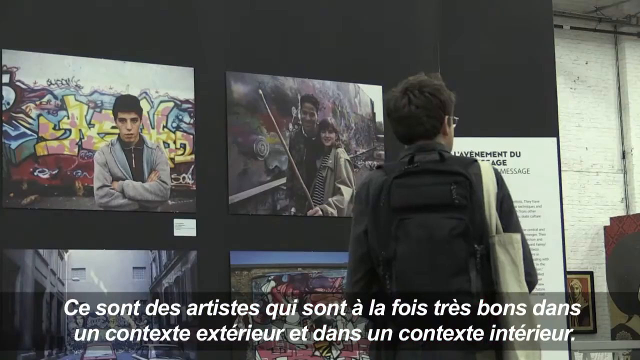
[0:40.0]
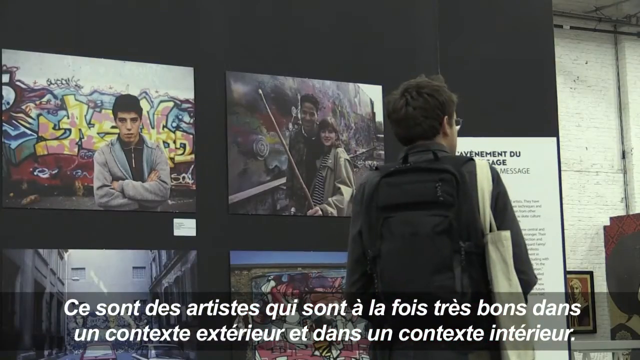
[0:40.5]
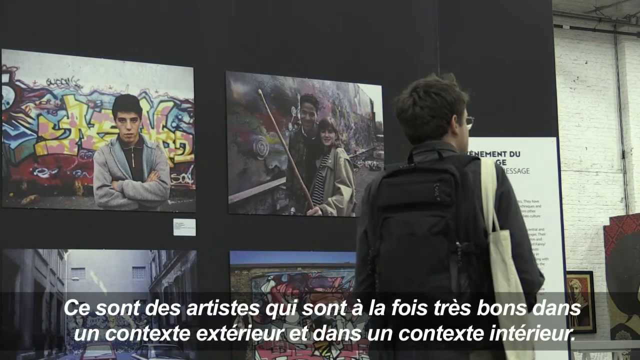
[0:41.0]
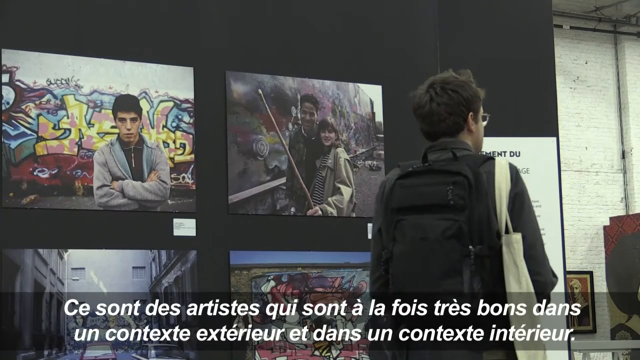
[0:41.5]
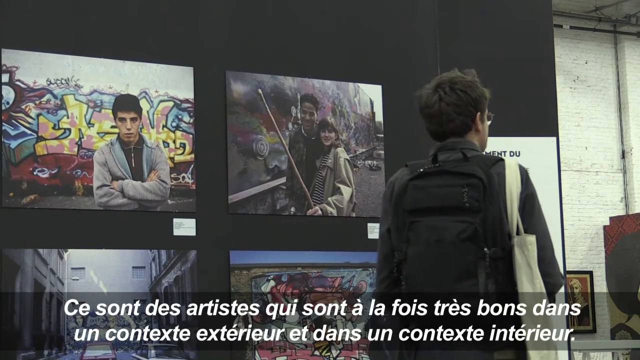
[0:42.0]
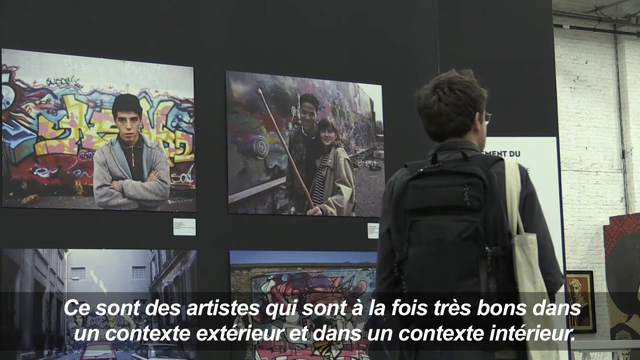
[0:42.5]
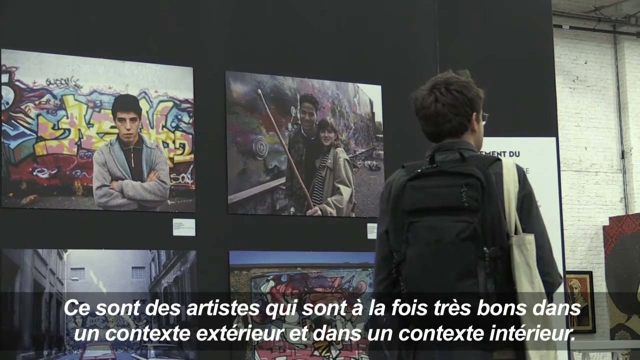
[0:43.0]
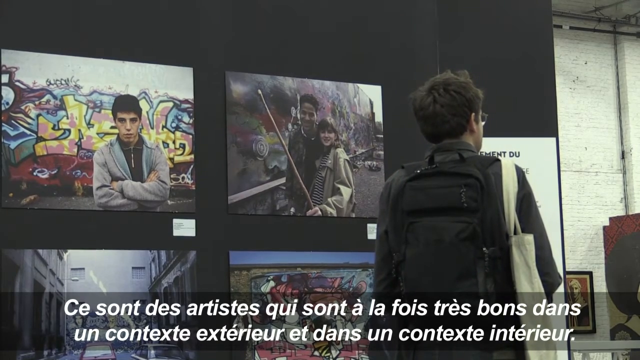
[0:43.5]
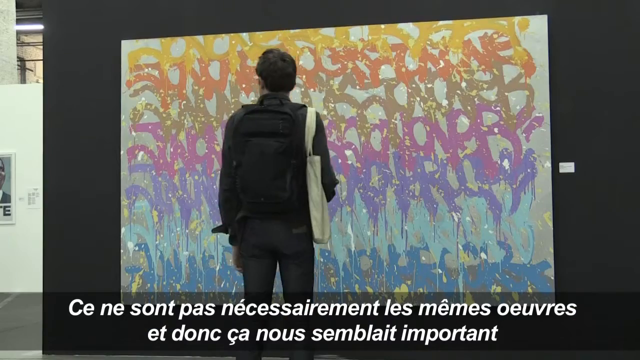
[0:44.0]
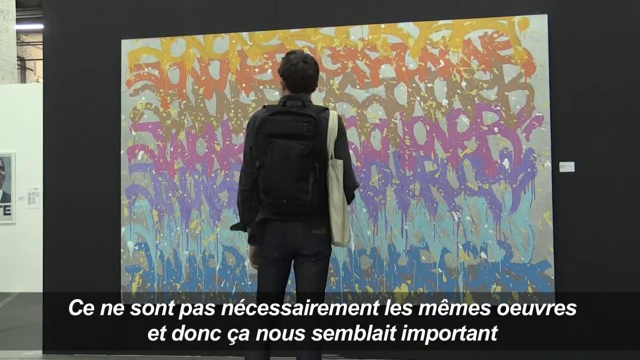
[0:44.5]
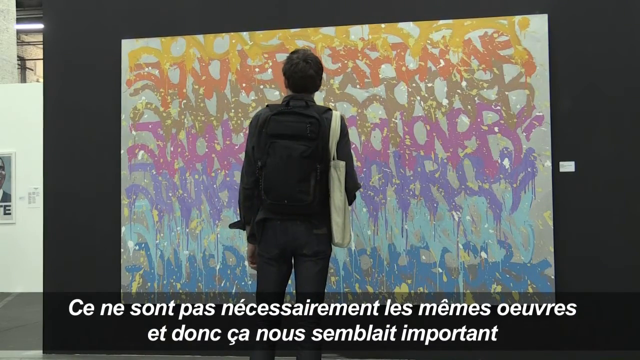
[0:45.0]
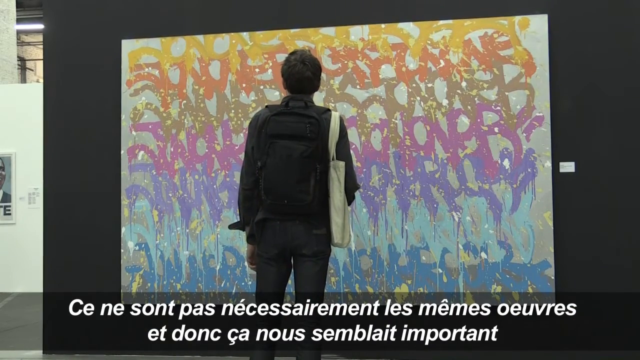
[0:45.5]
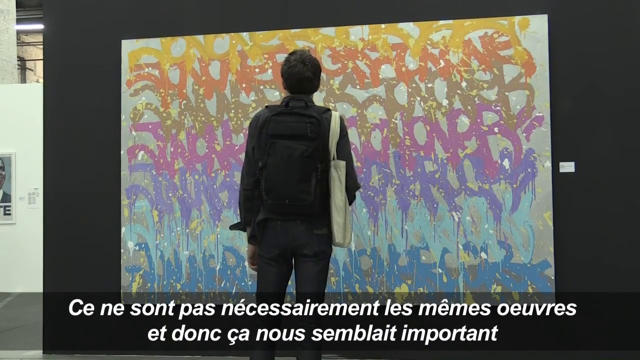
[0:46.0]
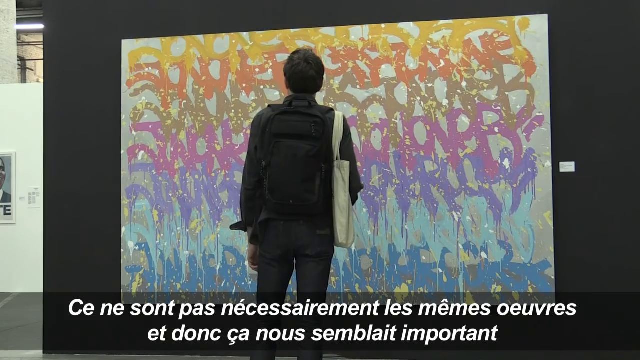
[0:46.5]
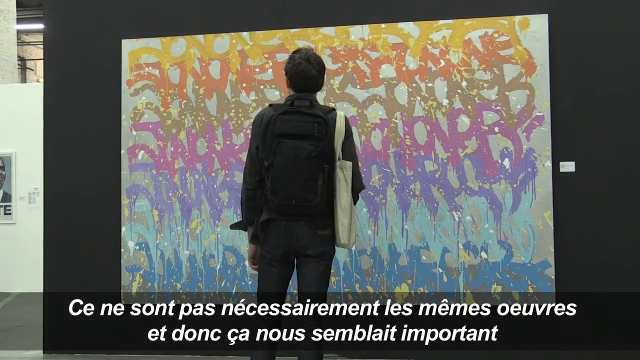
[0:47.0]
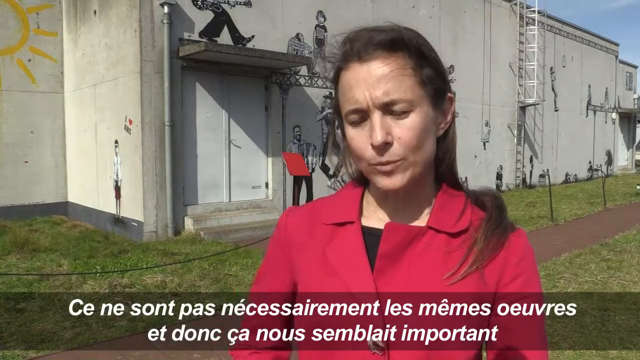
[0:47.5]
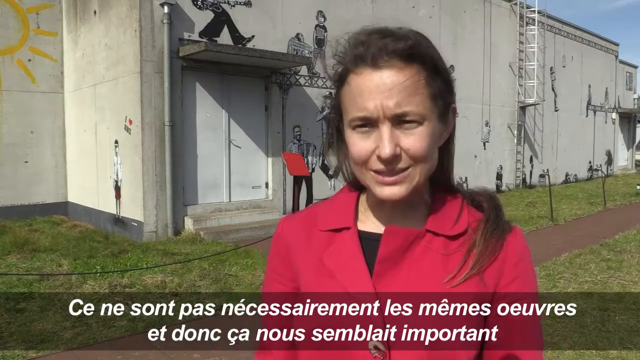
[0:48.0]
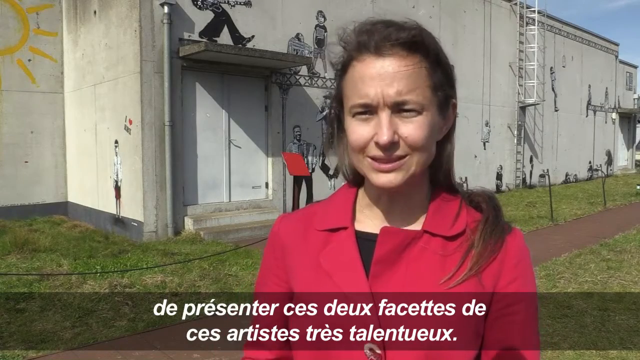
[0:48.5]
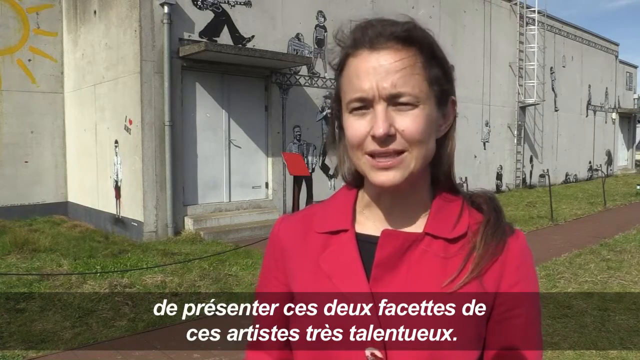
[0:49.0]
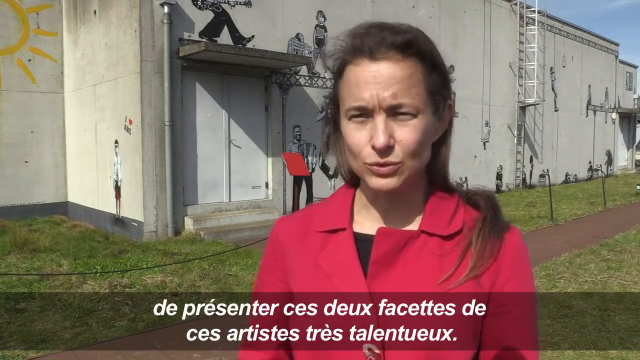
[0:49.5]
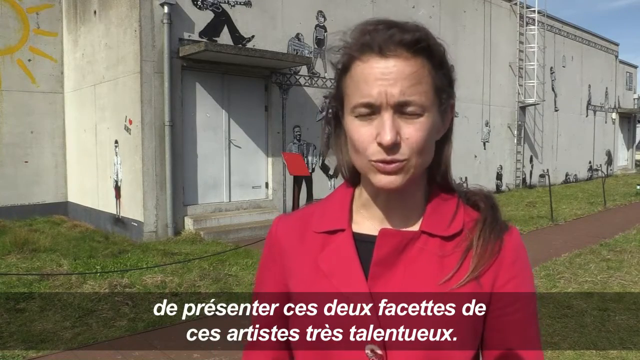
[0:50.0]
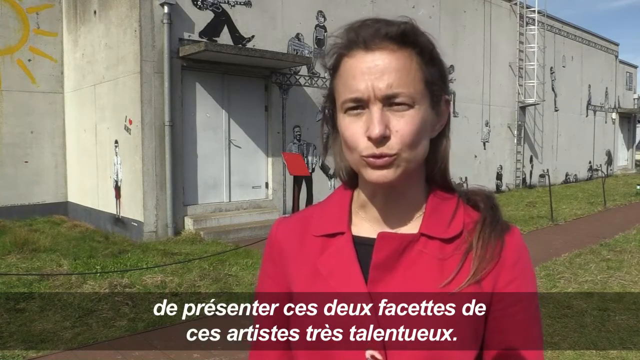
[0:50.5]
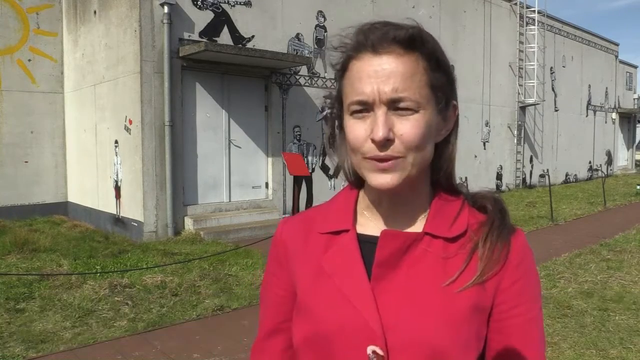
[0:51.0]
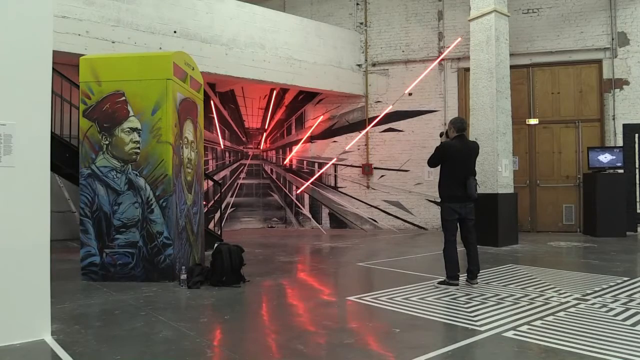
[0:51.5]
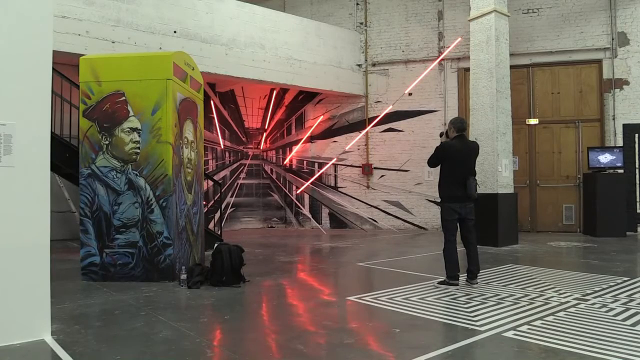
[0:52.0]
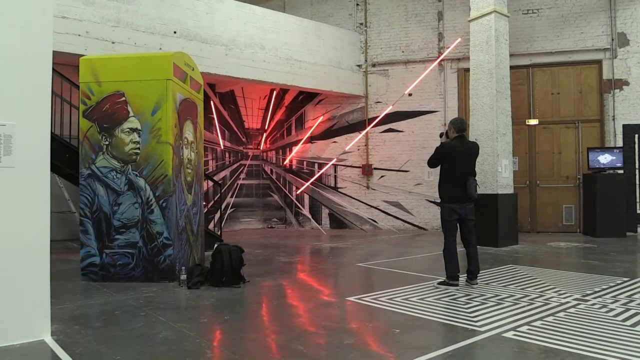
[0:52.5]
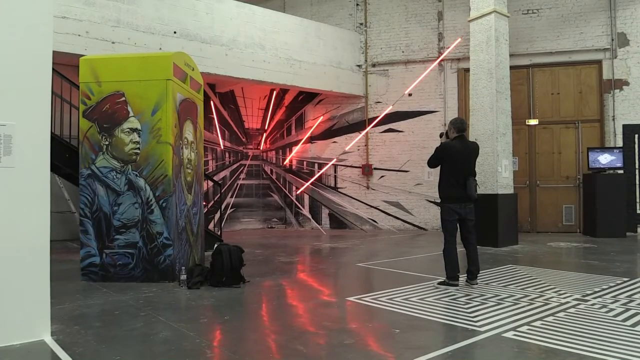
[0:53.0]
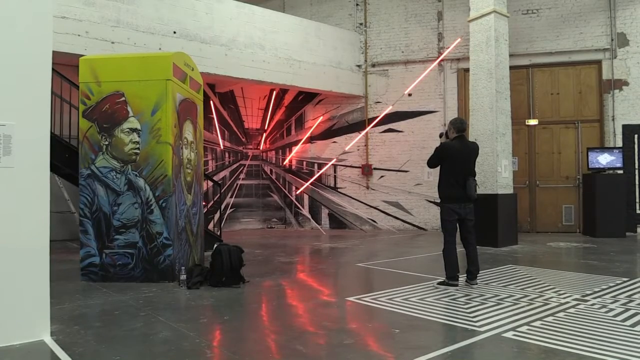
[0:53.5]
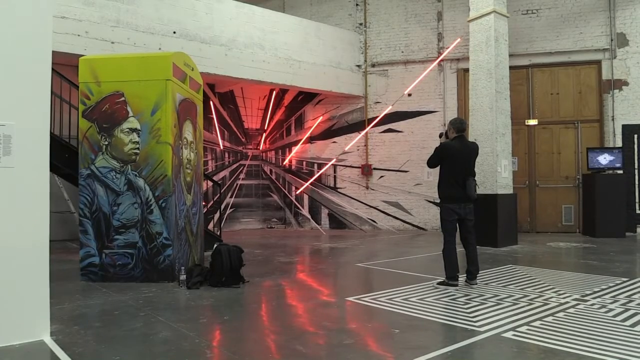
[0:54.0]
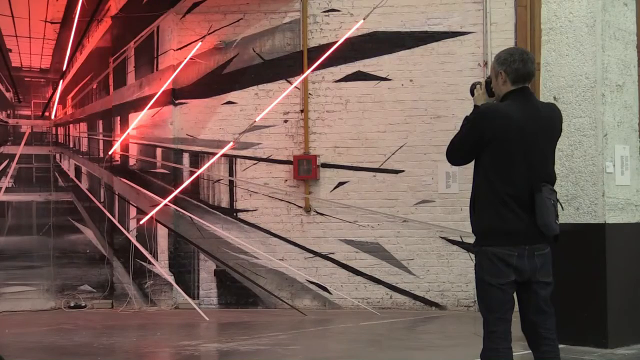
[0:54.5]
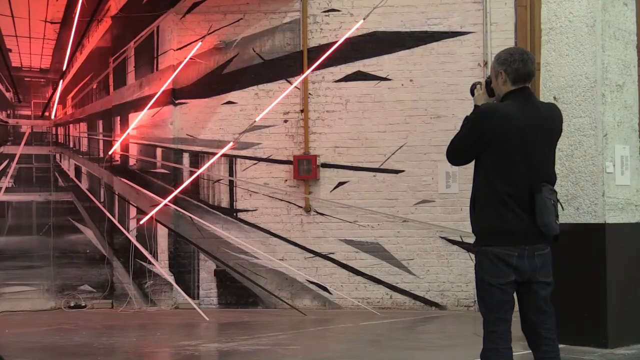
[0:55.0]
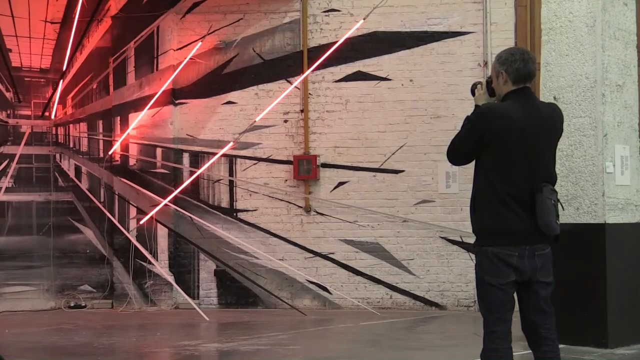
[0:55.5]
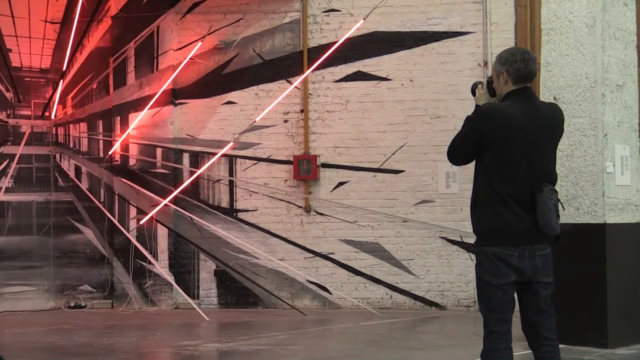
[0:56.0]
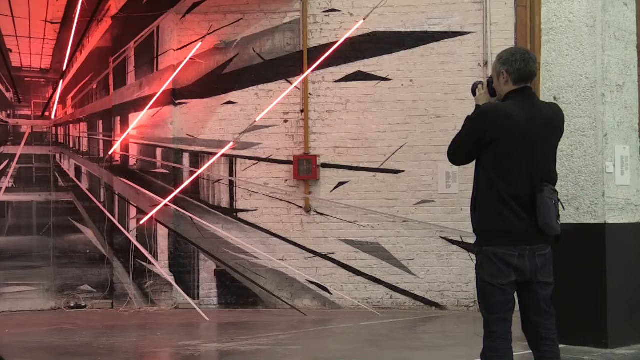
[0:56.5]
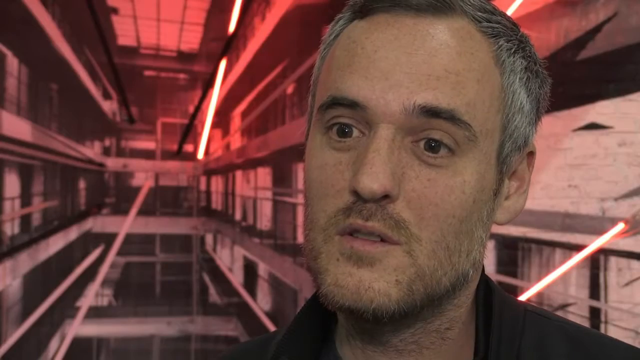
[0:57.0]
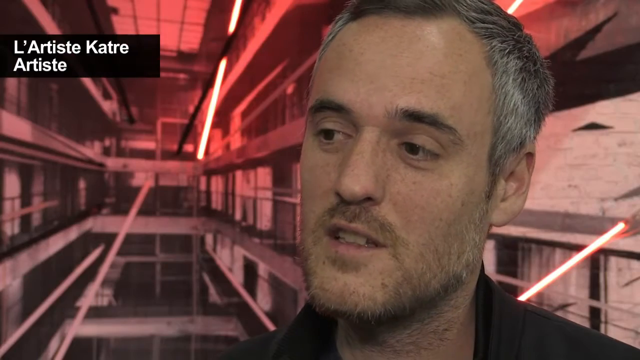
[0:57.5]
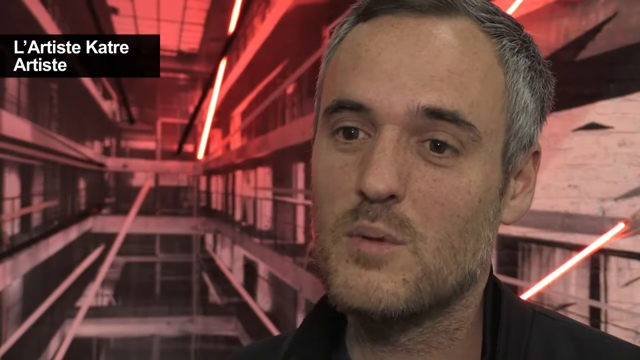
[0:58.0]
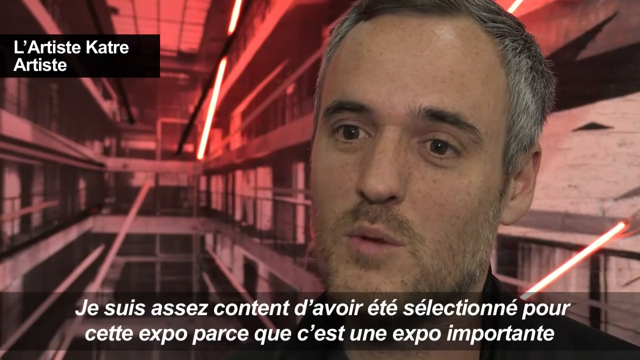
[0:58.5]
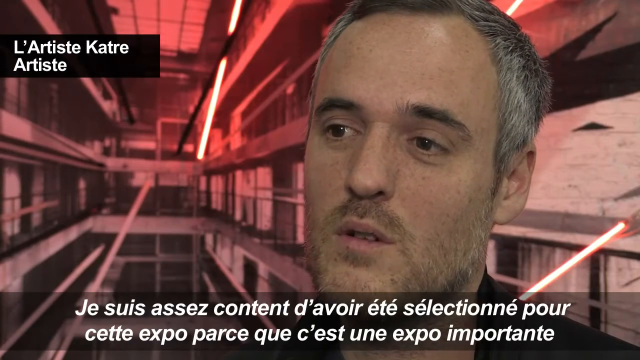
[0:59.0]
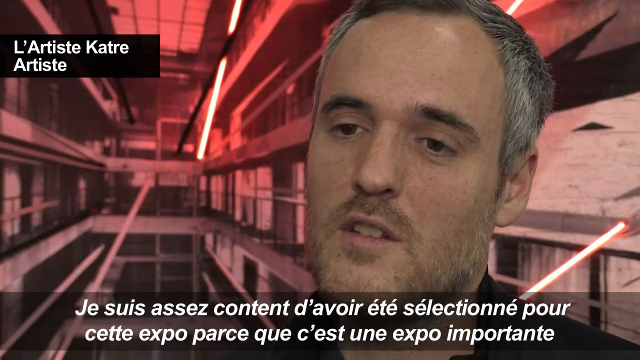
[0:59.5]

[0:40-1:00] The scene changes to what looks like a graffiti art display show, with people walking around and admiring the art. A young boy with a backpack looks at some art on a black wall, then looks at a huge, very colorful piece of art; he seems to be enjoying the view. The camera is back on Magda, who is apparently speaking about more art. Inside the building again, an elderly man is taking photographs of some art. The camera zooms in on him, giving a close view of him taking pictures. The same artist is then shown close up: he has grey hair and looks a bit elderly, is fair in complexion and has facial hair. He is most probably speaking about his art.